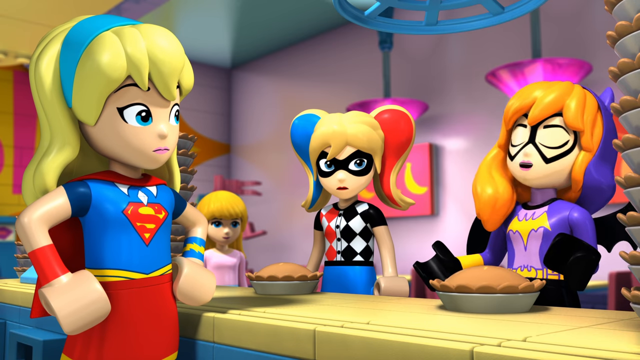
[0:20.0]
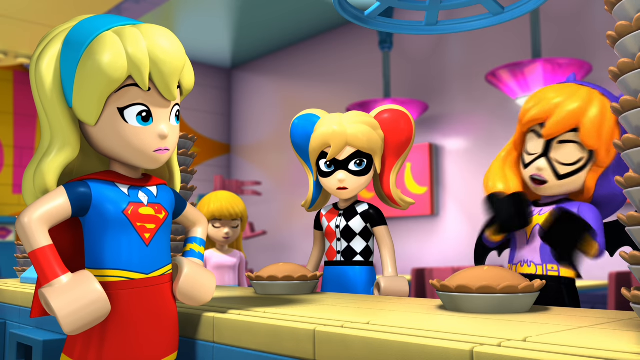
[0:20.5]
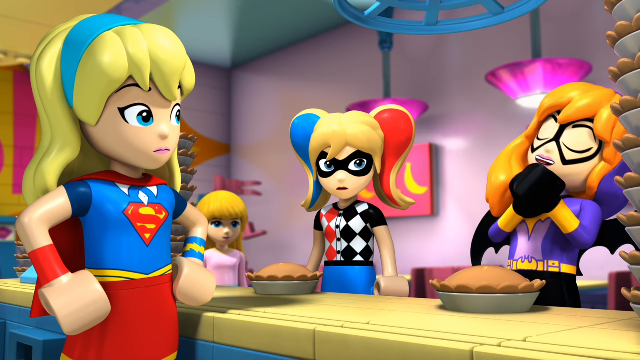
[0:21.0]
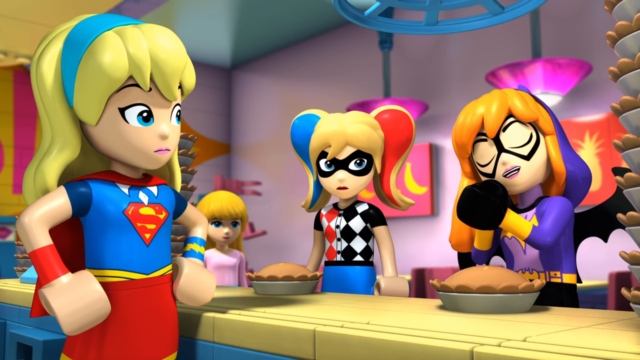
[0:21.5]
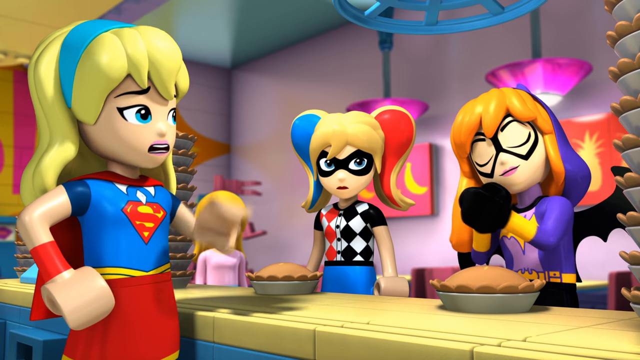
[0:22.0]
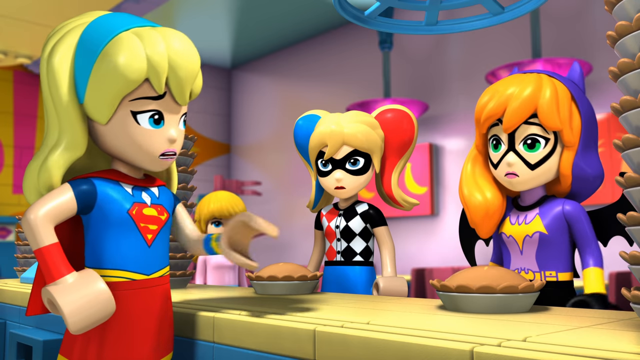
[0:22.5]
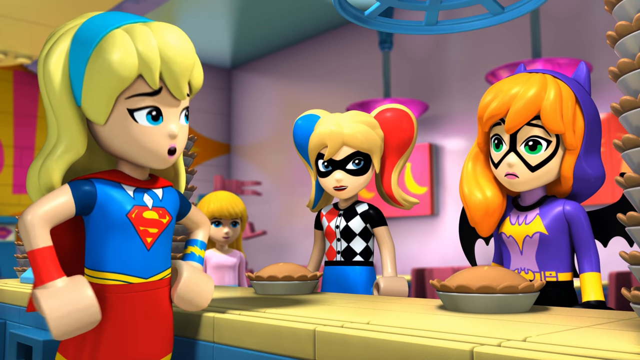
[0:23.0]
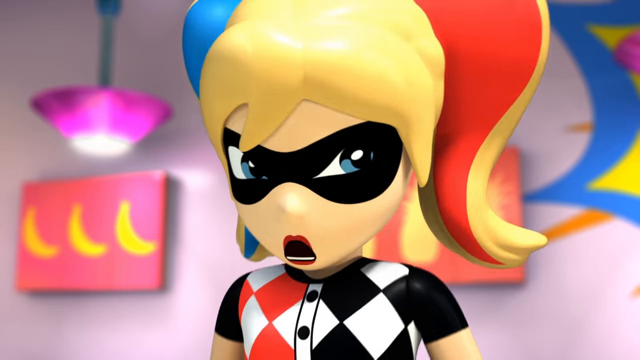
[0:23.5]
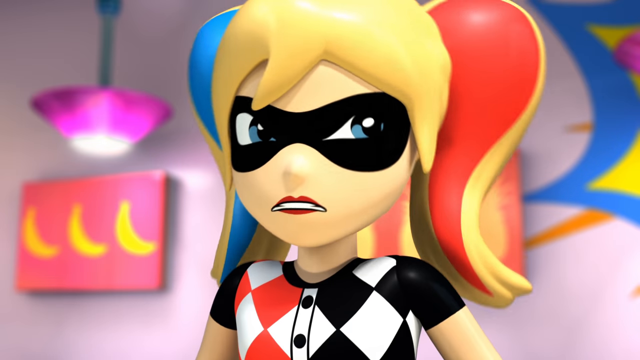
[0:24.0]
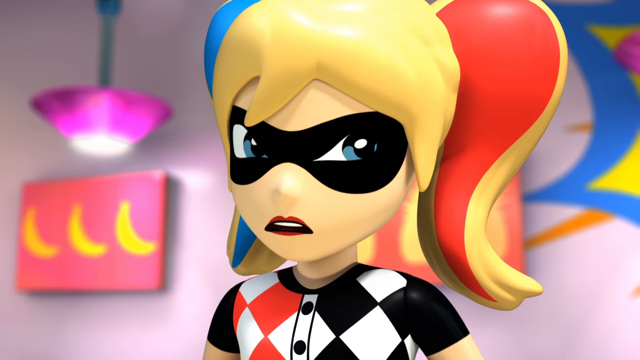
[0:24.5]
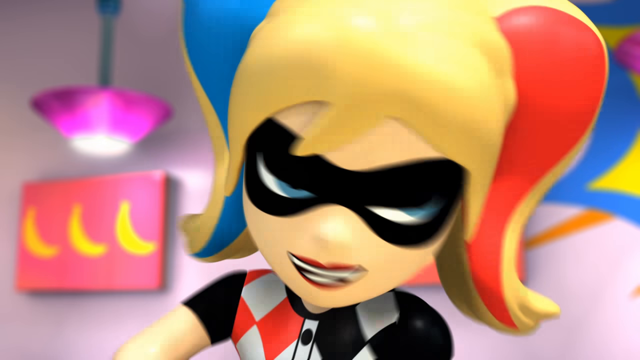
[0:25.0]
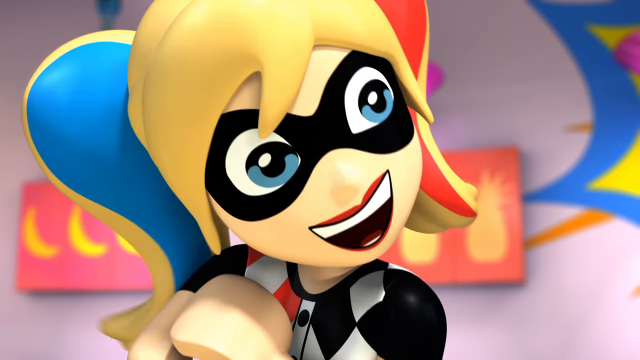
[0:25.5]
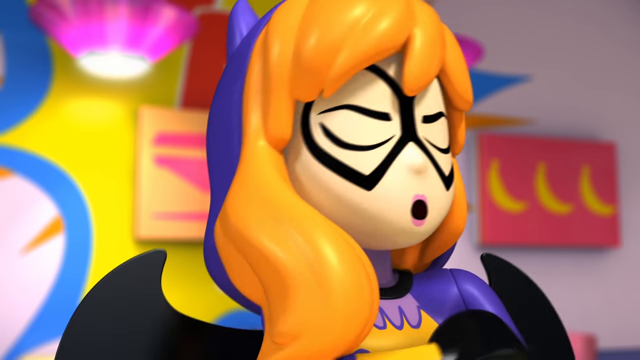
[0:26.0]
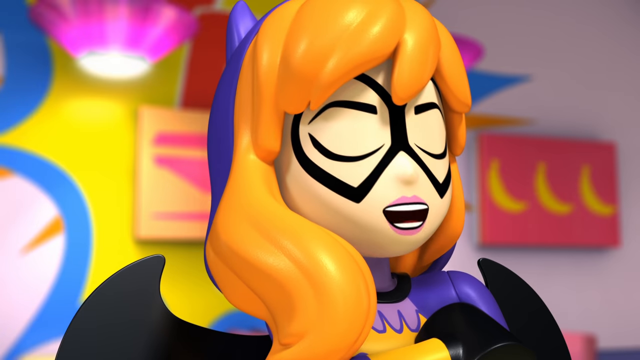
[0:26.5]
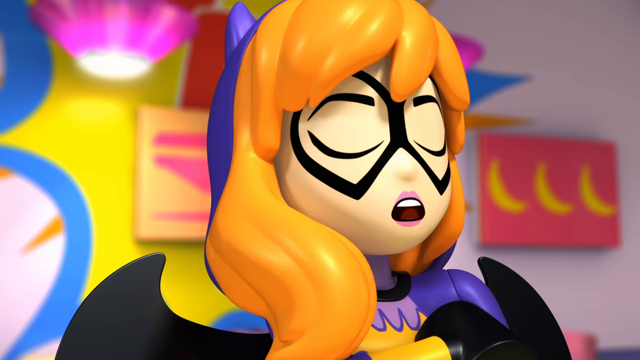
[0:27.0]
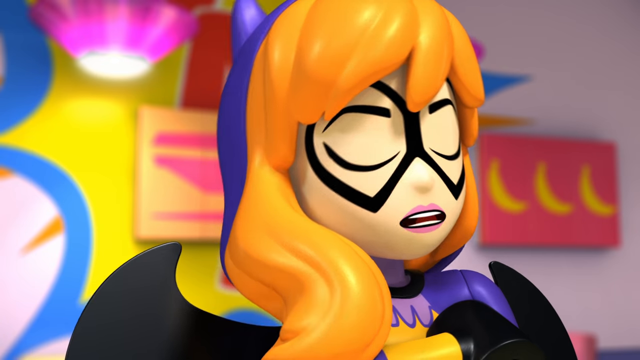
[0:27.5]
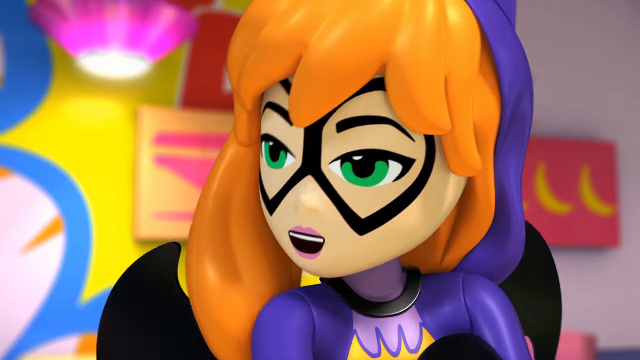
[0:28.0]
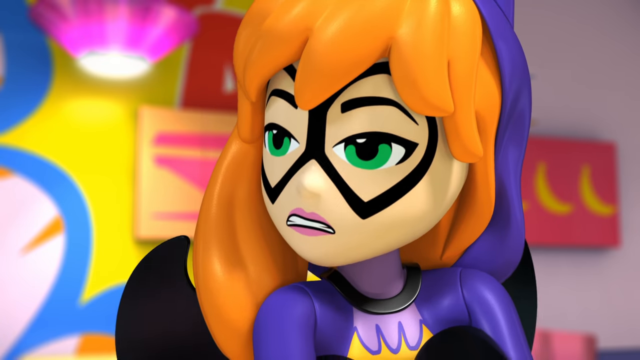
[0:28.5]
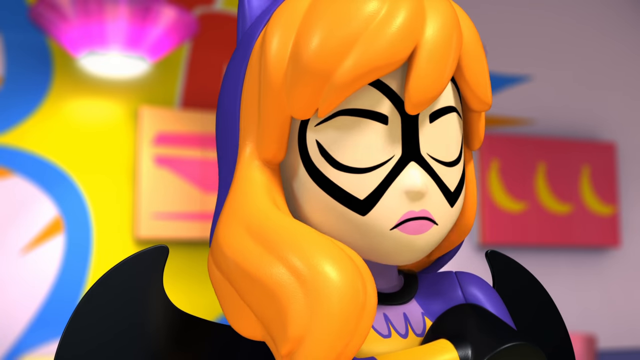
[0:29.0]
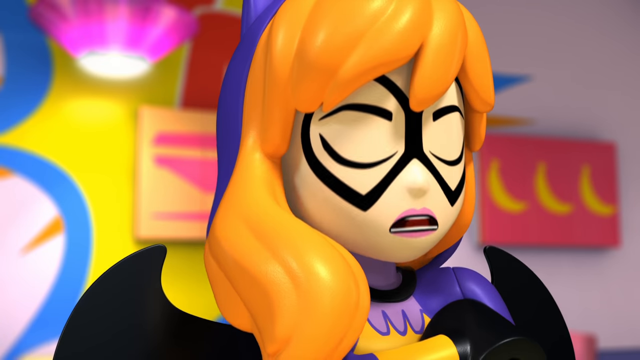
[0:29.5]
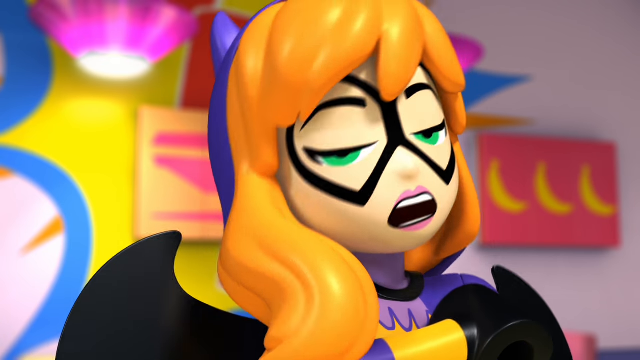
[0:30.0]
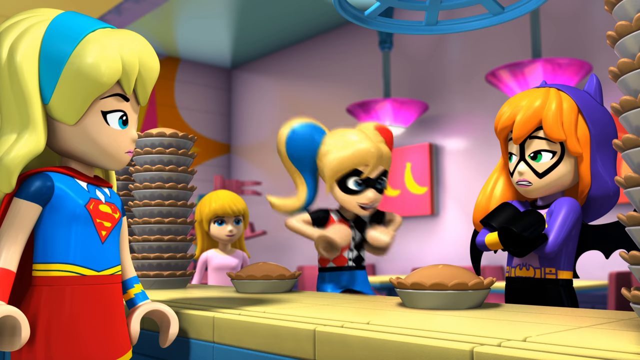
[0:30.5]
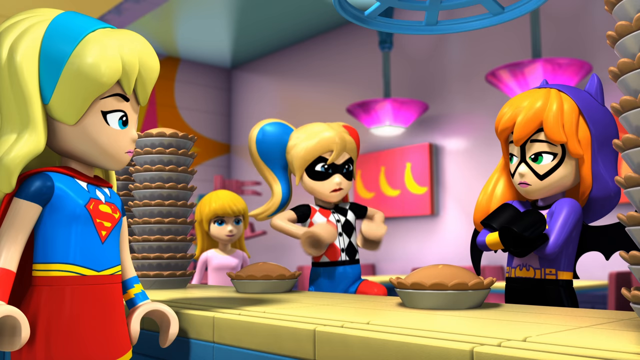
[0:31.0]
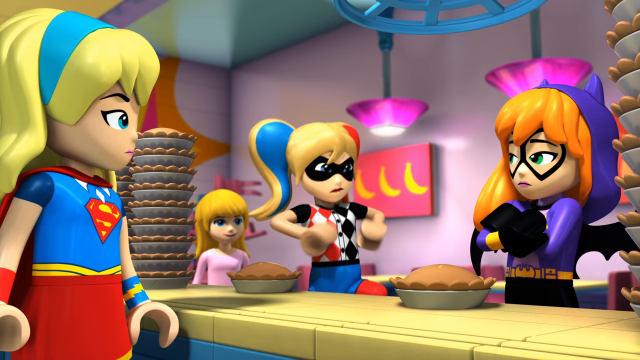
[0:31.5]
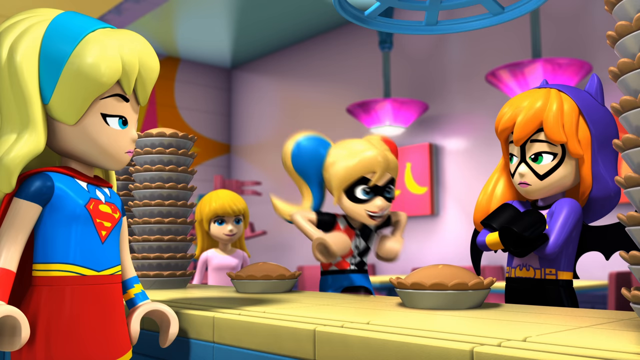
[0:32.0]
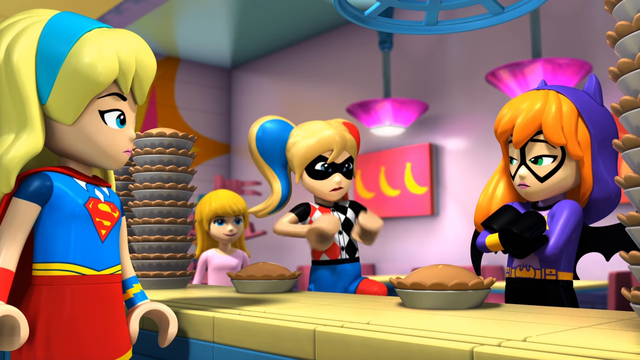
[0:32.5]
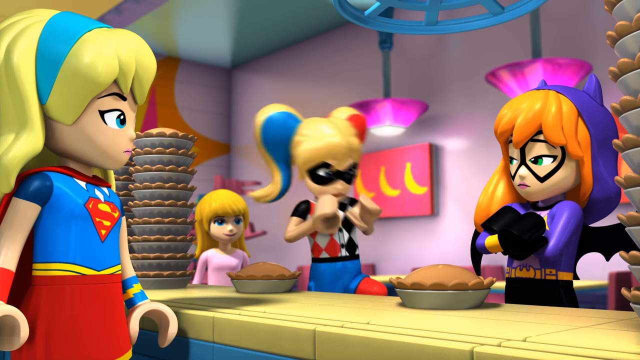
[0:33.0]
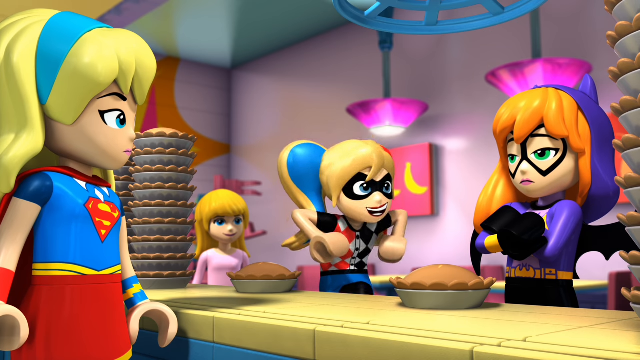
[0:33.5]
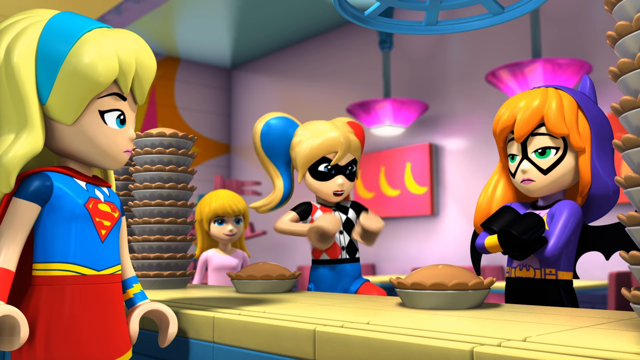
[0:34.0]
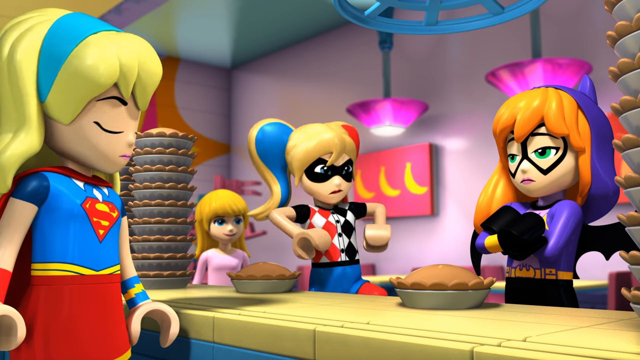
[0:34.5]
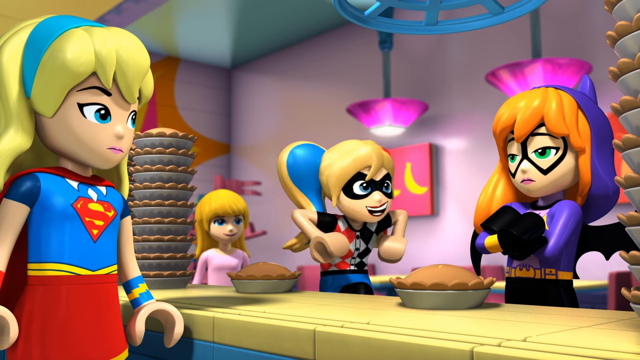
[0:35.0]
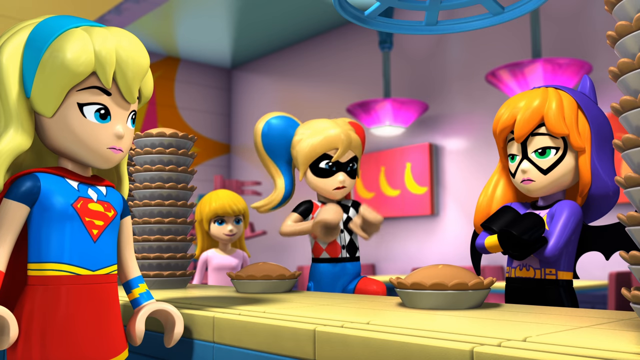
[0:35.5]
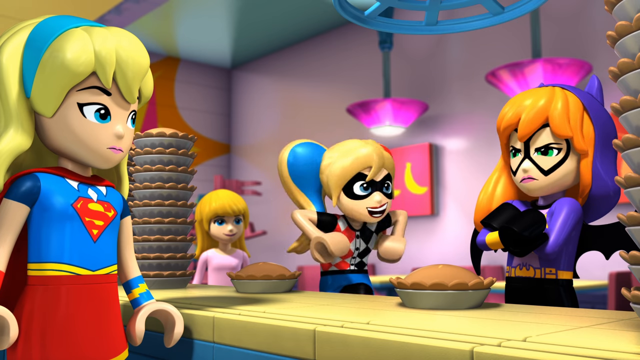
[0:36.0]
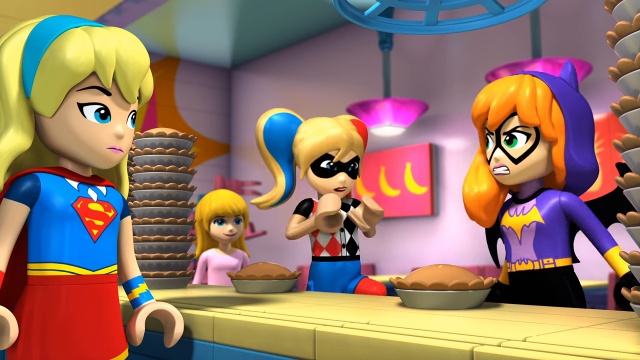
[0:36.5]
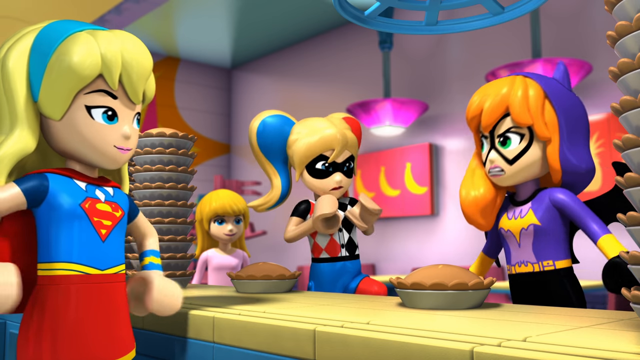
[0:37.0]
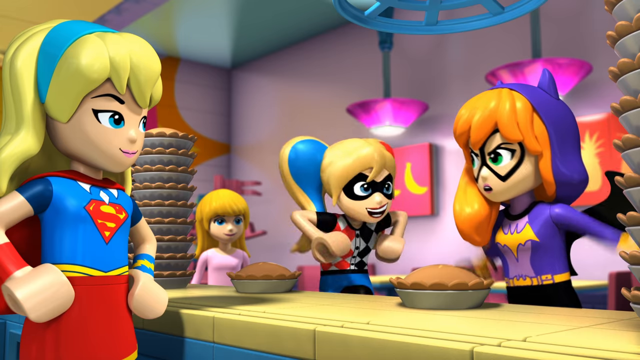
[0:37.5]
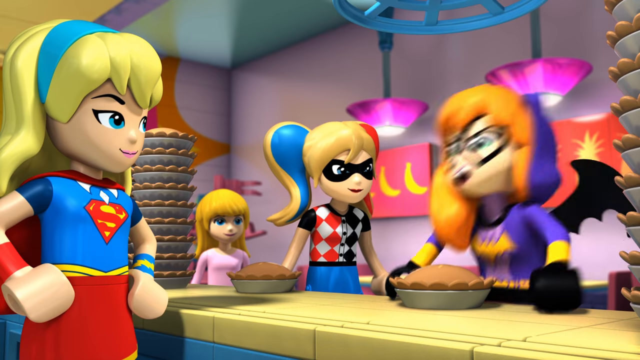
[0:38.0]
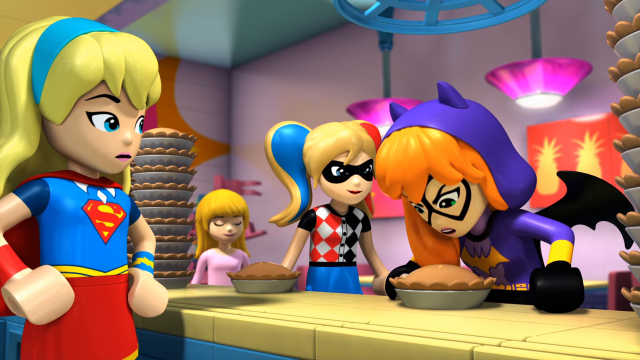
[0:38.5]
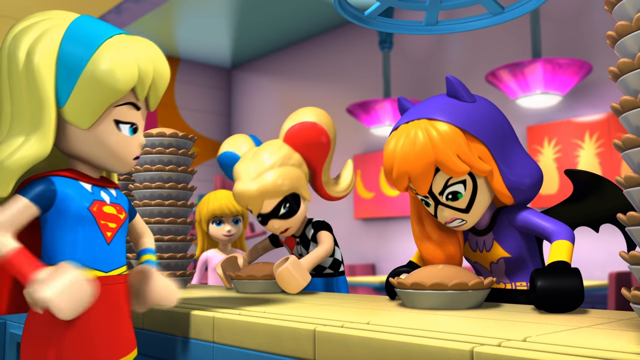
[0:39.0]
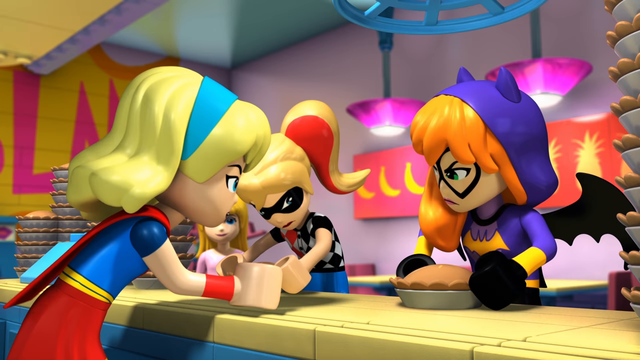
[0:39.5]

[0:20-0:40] Batgirl has a pie between her hands. She wears black gloves, and since the characters are Lego characters, their hands are curved. She has orange hair, an outline of a black mask on her face with her eyes visible, a purple hood, a yellow bat on her uniform, and green eyes. Harley Quinn bends her arms with her hands near her underarms and flaps them like wings, like someone calling another person chicken, apparently aimed at Batgirl. It seems they may be having a pie-eating contest.